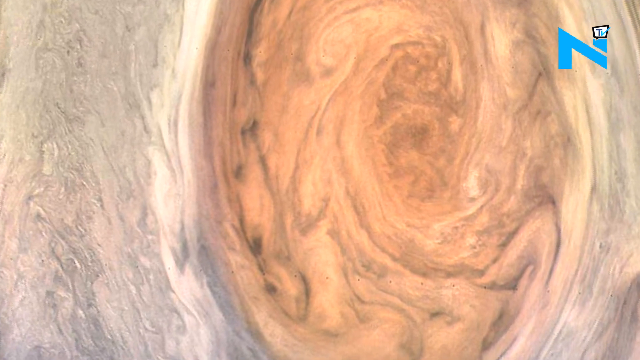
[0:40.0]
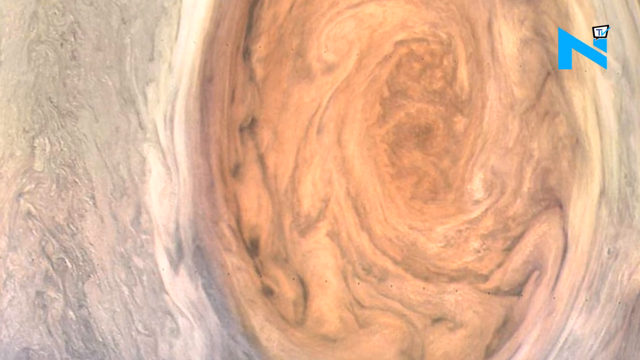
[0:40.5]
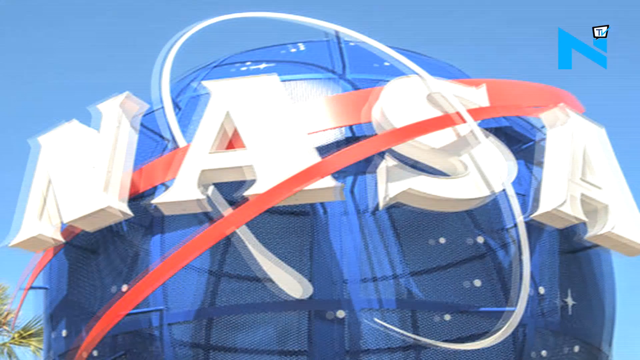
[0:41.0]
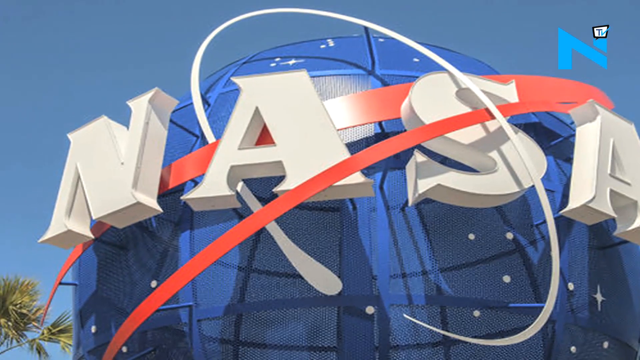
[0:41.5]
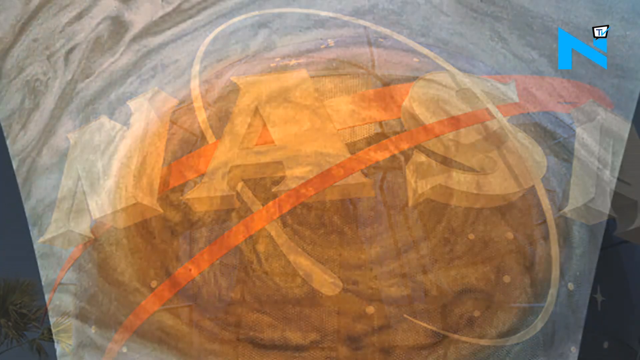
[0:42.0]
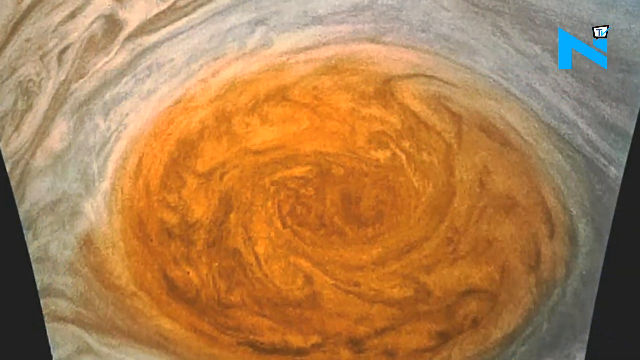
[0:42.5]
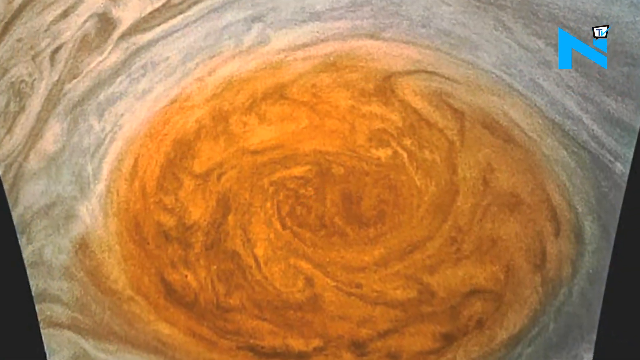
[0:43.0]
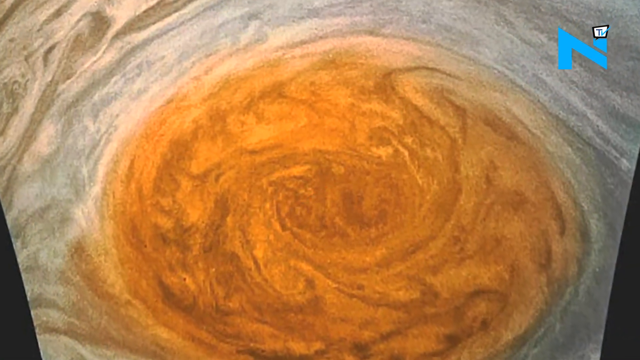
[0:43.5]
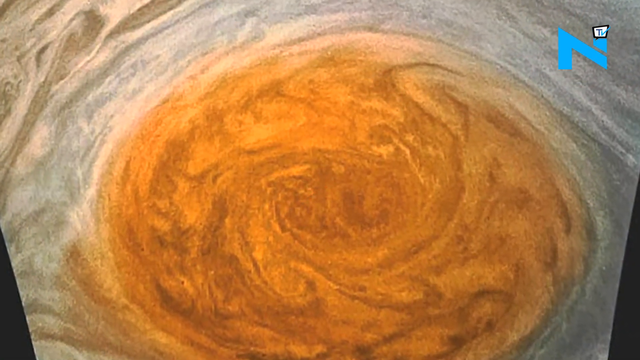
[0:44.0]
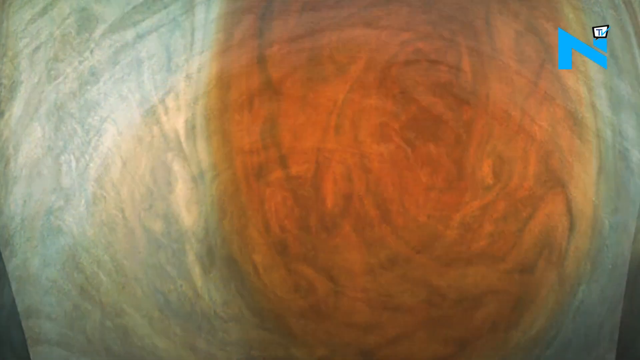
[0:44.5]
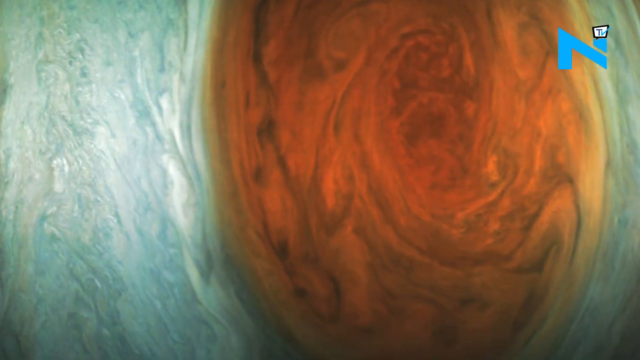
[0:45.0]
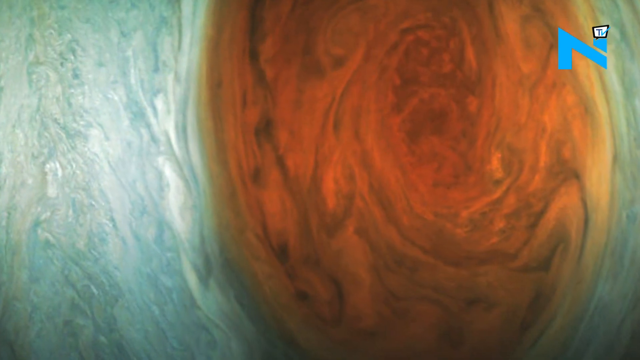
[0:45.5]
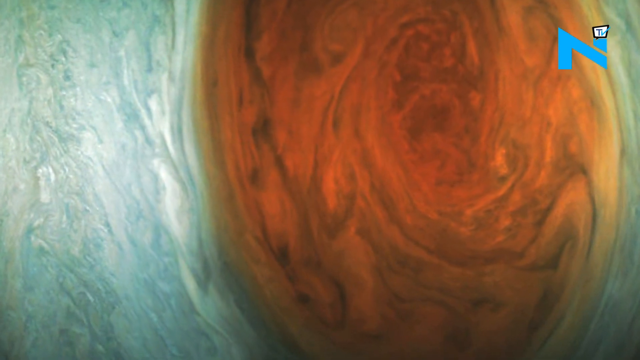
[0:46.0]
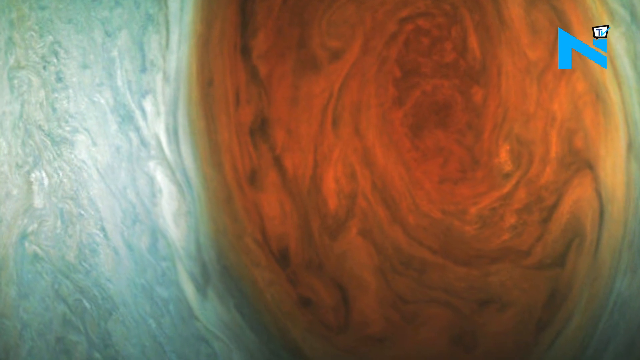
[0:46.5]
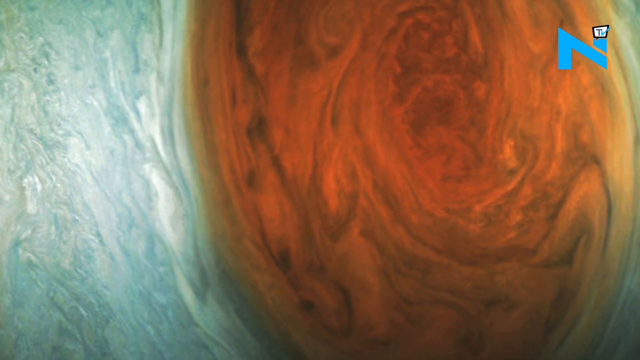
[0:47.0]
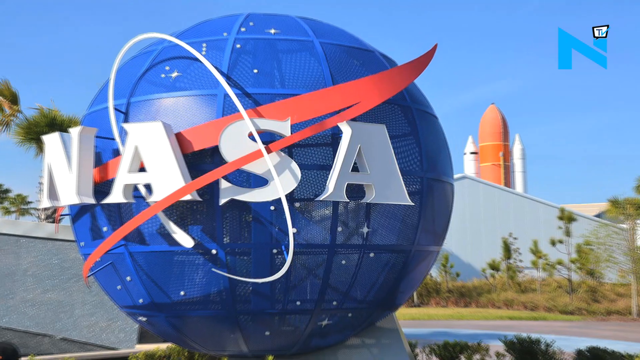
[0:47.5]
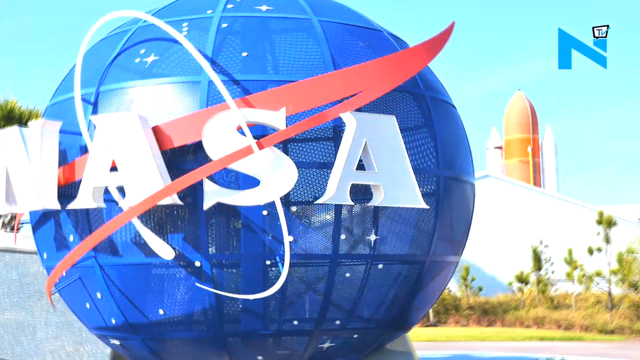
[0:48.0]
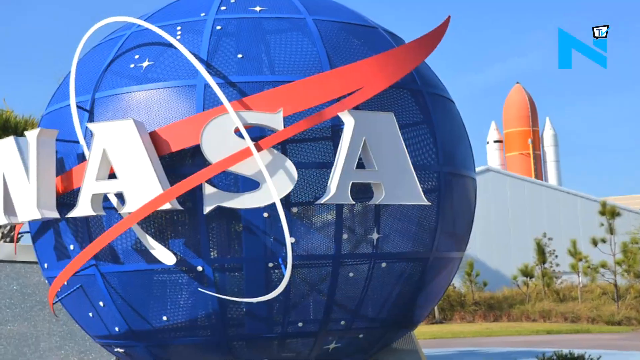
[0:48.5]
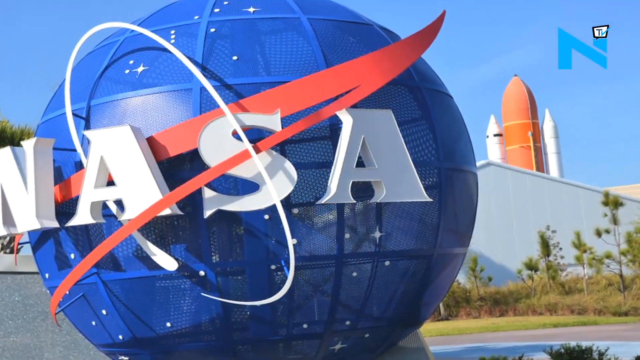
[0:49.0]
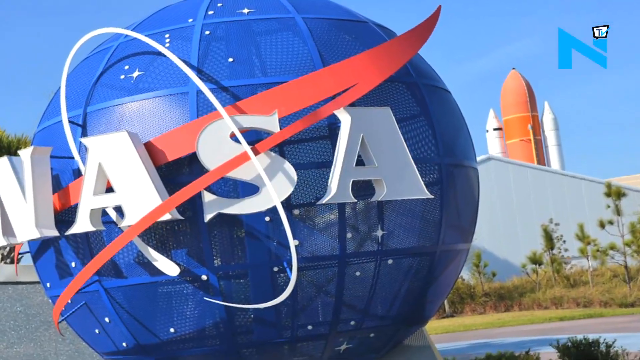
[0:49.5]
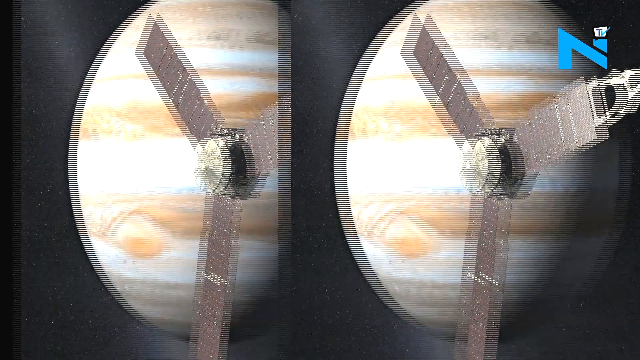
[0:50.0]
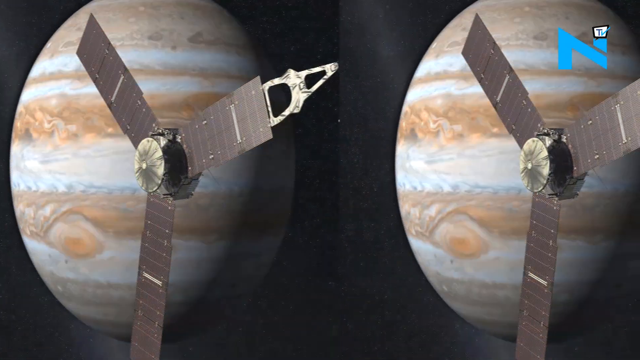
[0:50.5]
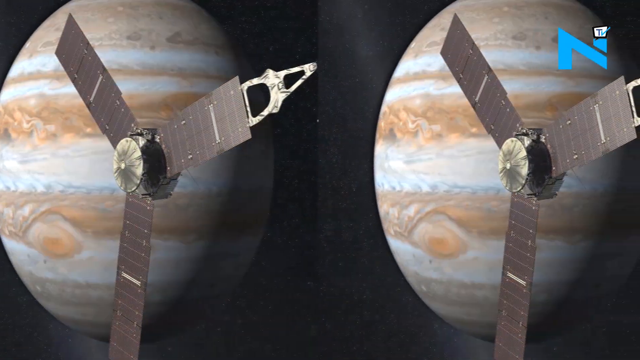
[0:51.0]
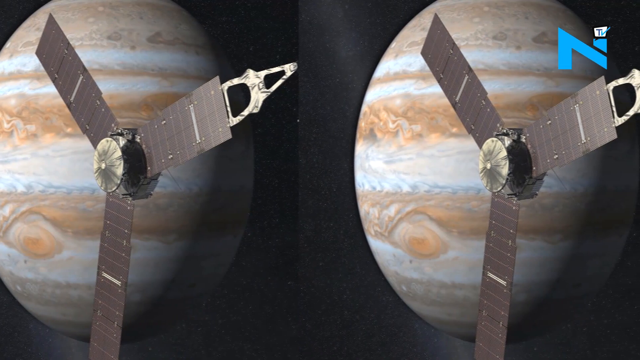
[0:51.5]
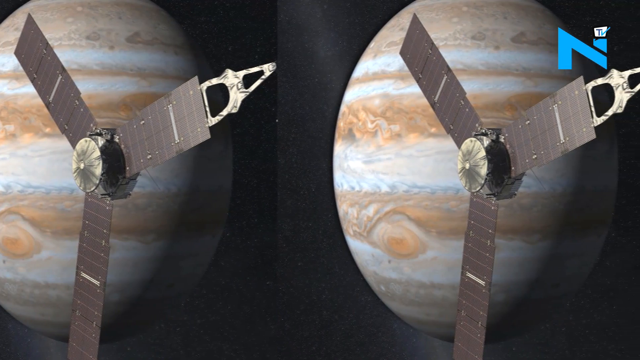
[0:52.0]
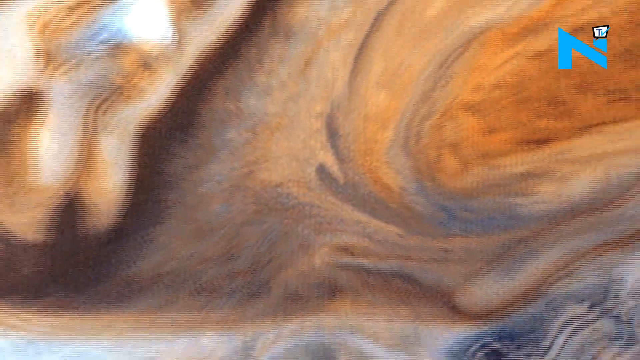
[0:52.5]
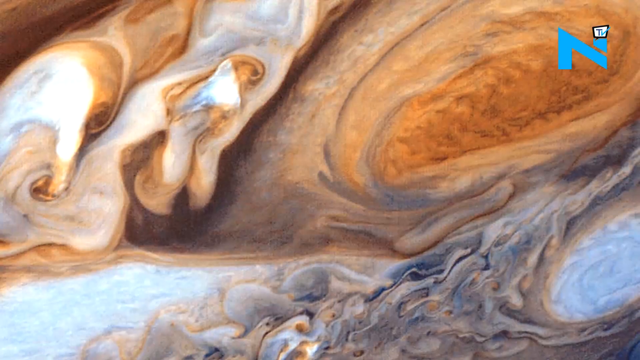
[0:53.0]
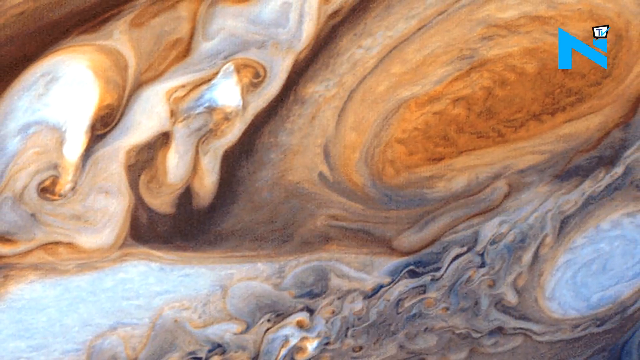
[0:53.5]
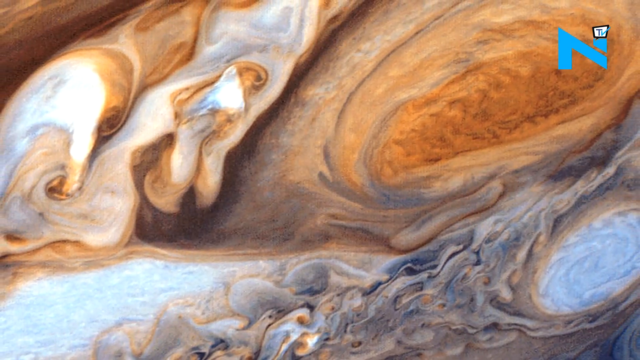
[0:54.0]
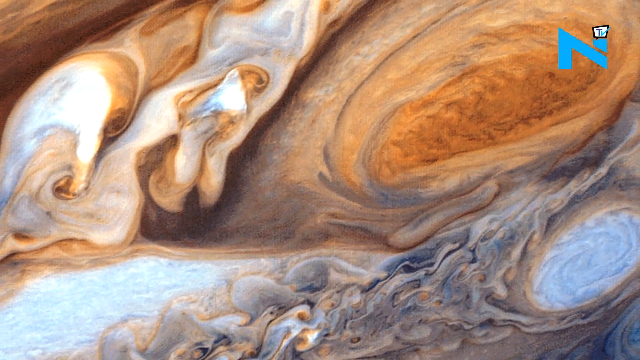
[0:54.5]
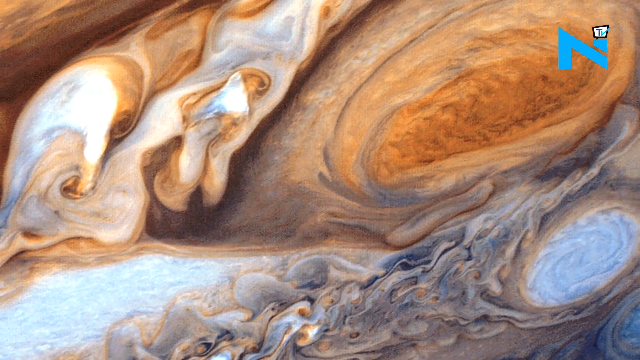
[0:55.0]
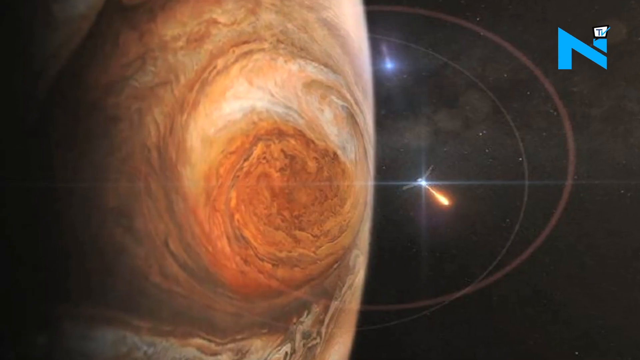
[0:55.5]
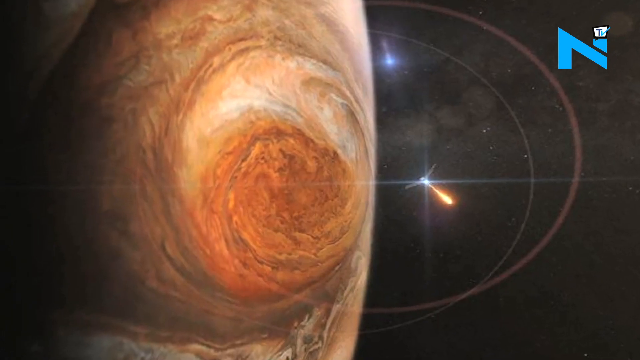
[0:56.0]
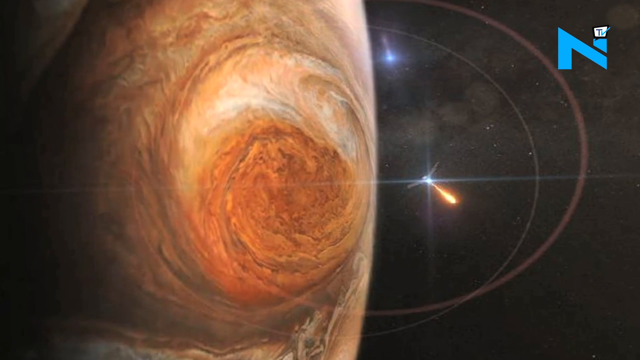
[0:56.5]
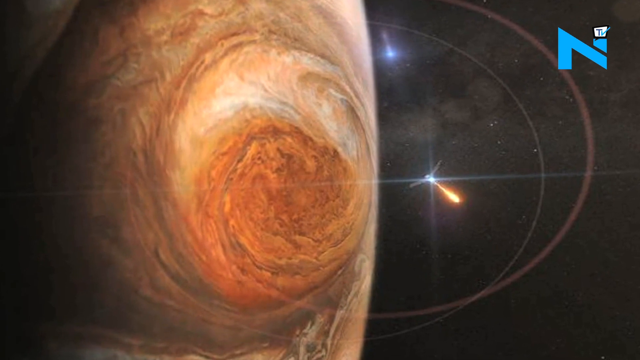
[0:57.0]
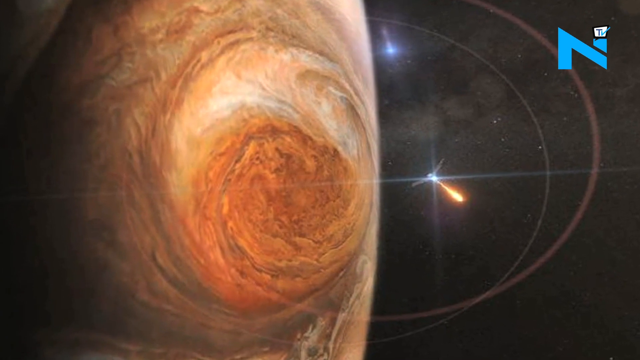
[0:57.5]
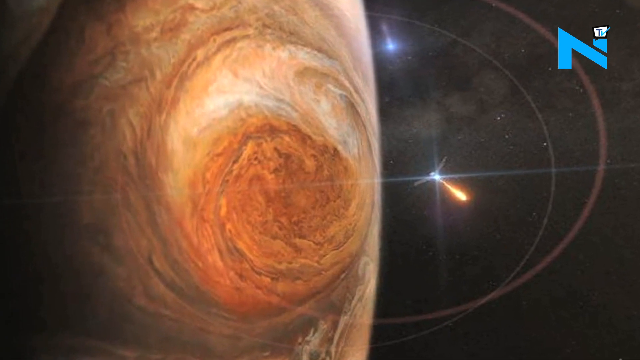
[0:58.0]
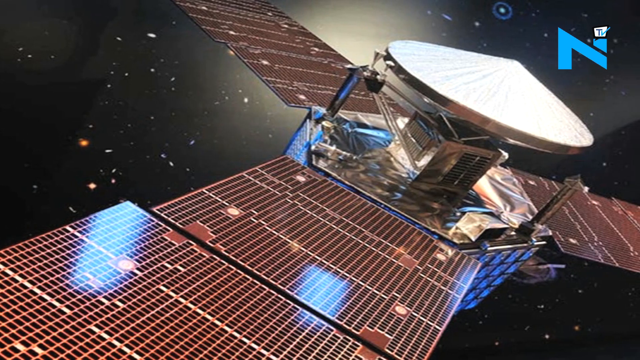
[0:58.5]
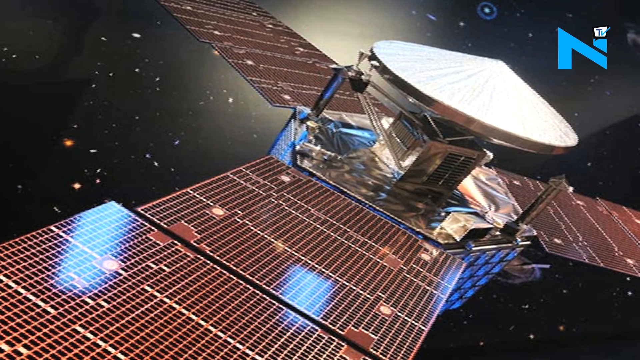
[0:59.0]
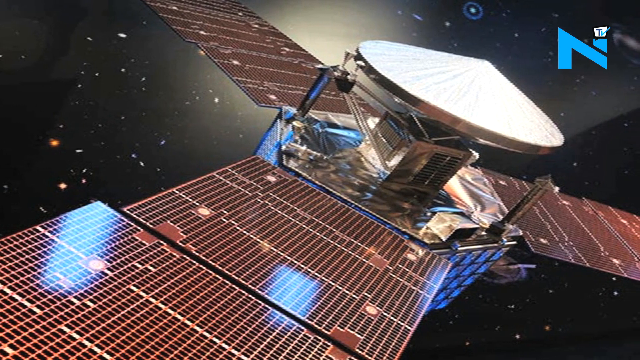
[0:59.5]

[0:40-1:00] A close-up view shows a large globe, an illustration of the giant NASA logo in 3D. Next comes the surface of a planet in orange and gray. The camera pans closer for a different view in reddish, brownish orange and green. The NASA globe is shown again, and in the background behind a building is a large orange rocket with a white rocket booster on either side, making two boosters. The camera angle pans. Two identical images then show a satellite with three wings flying across the face of the planet Jupiter. Swirling colors of orange, brown and blue show the surface of the planet in close-up. Then a large view shows the curvature of the planet on the left, with the satellite beside it and flames coming from its rocket; the satellite looks quite tiny compared to the planet. A close-up view of the satellite follows.